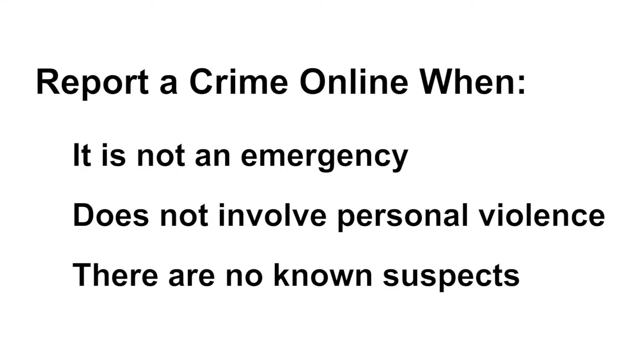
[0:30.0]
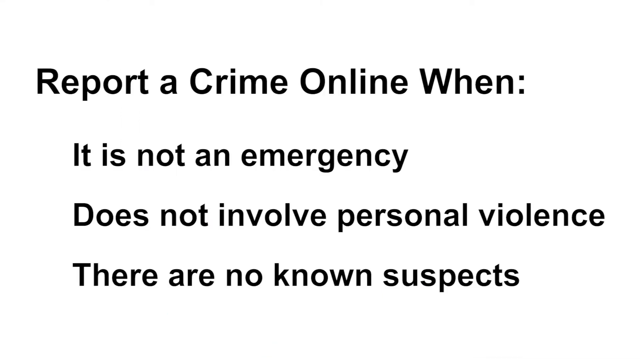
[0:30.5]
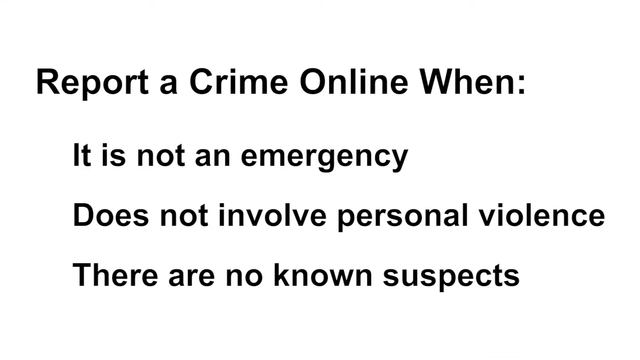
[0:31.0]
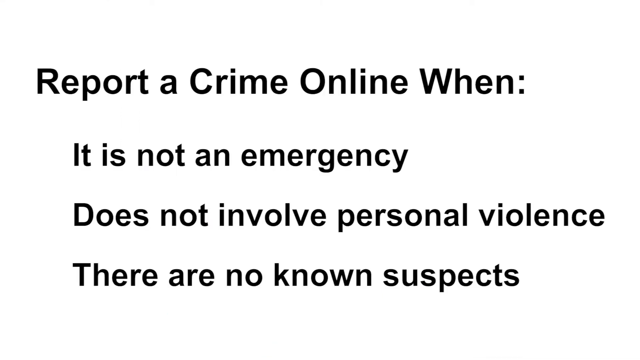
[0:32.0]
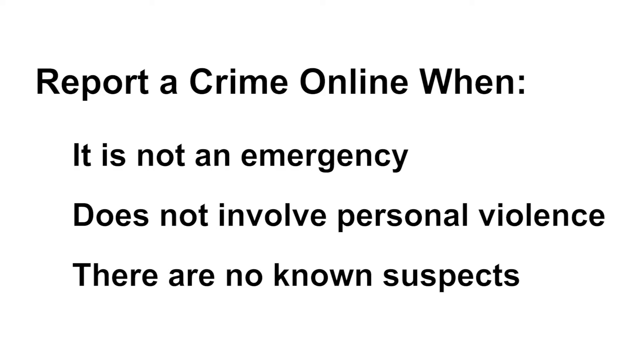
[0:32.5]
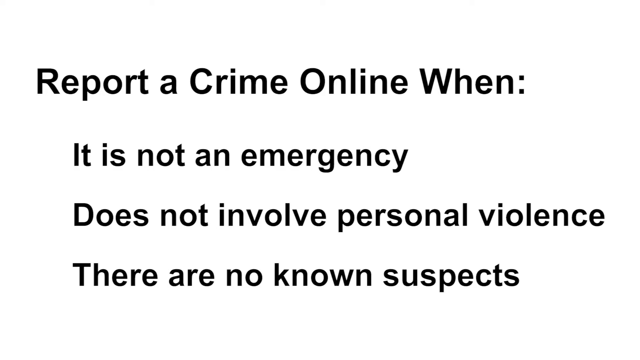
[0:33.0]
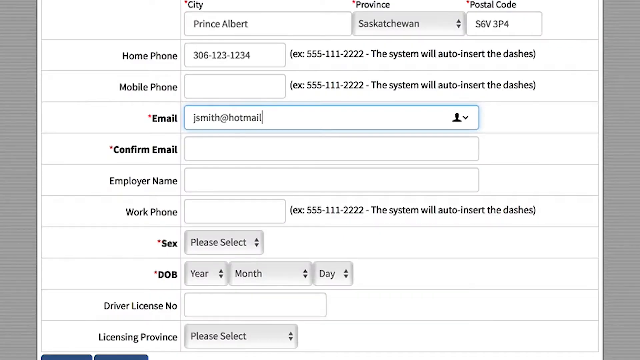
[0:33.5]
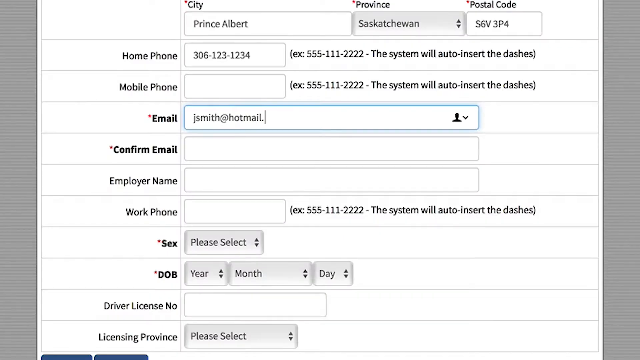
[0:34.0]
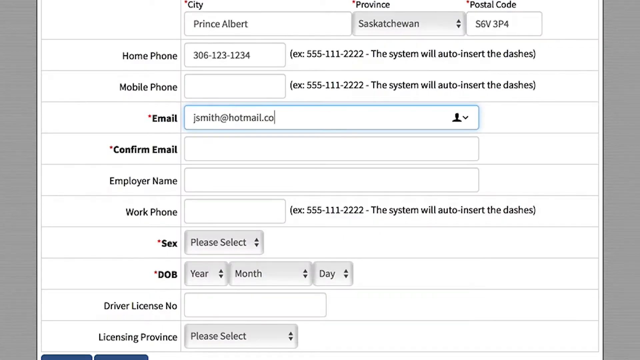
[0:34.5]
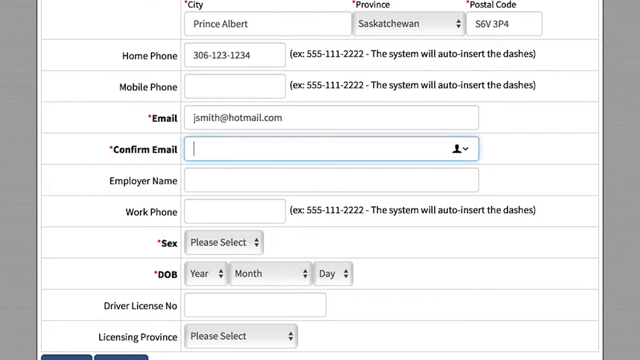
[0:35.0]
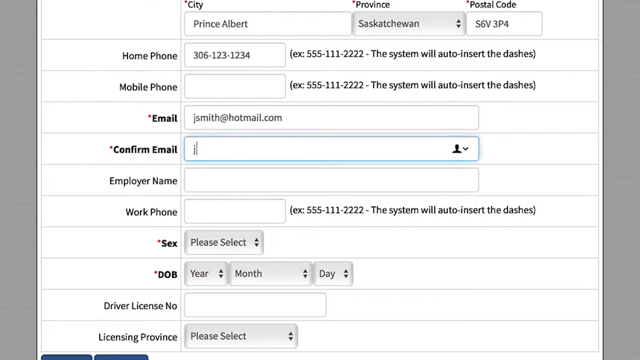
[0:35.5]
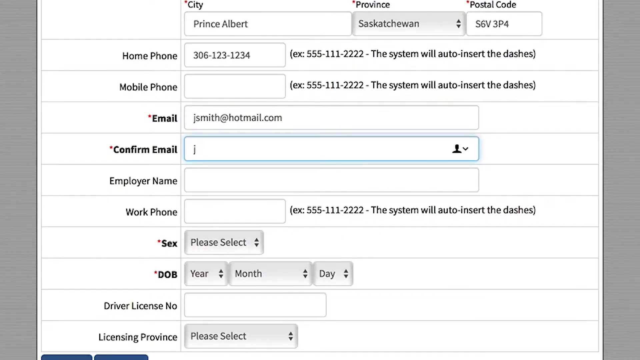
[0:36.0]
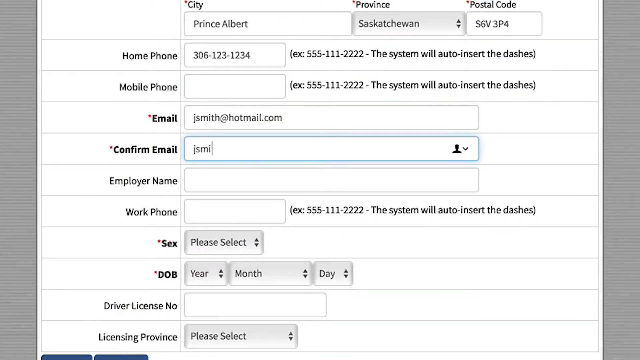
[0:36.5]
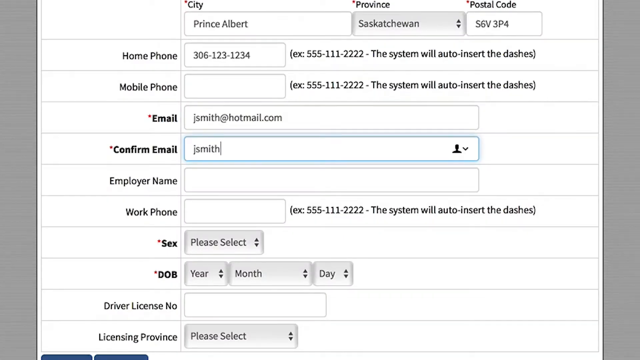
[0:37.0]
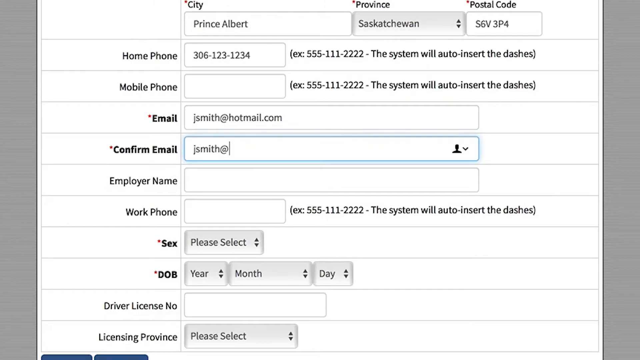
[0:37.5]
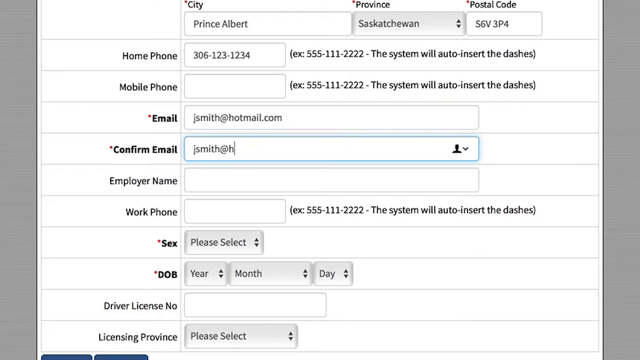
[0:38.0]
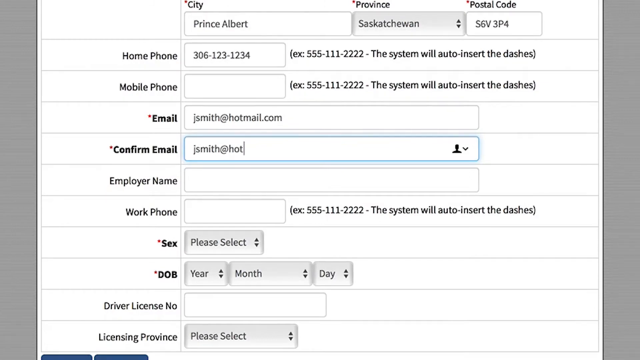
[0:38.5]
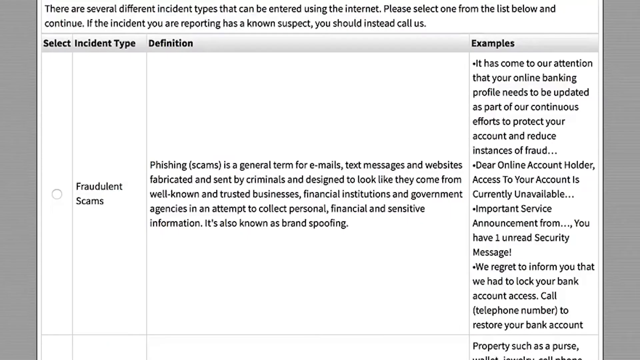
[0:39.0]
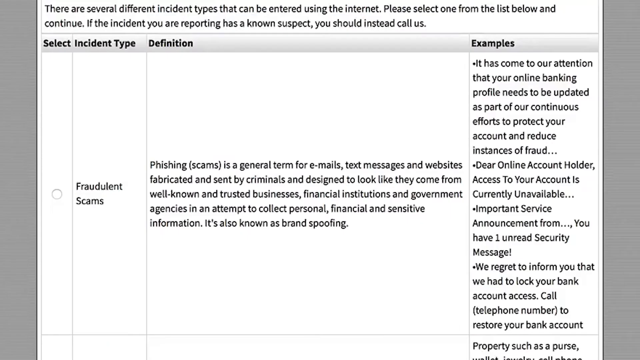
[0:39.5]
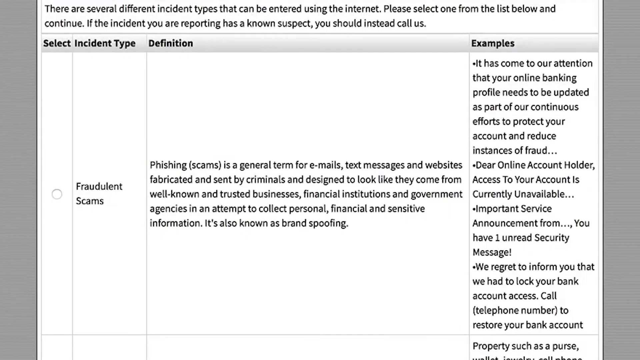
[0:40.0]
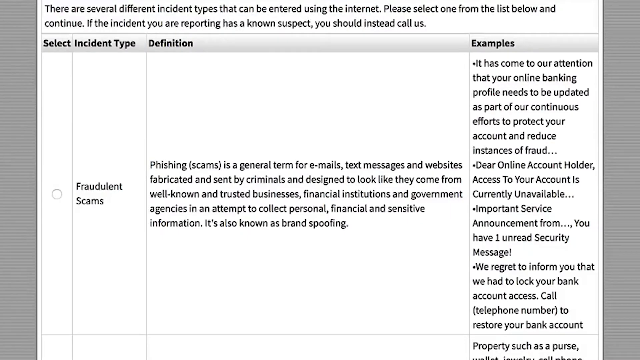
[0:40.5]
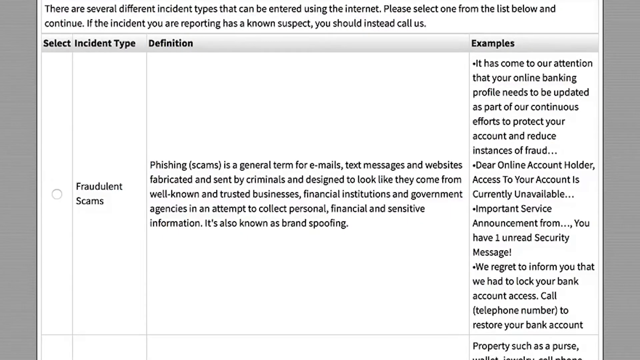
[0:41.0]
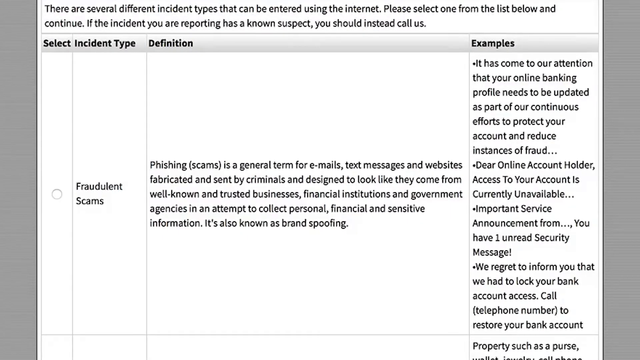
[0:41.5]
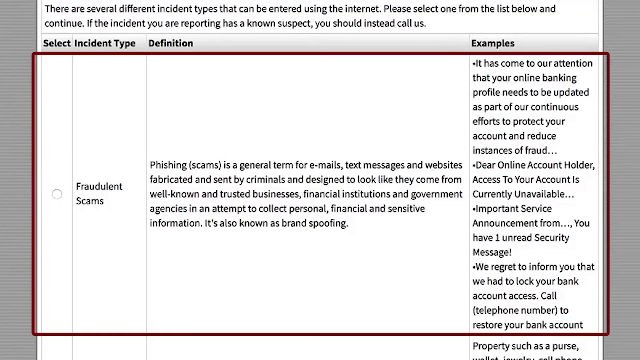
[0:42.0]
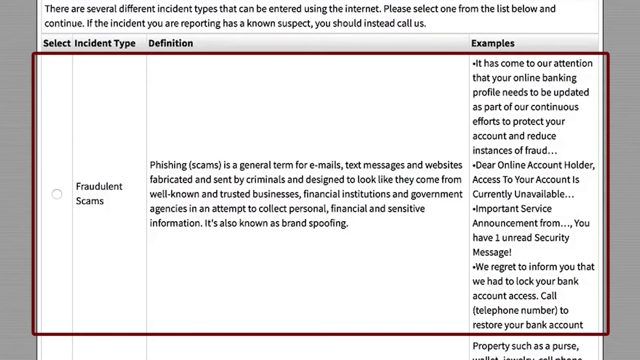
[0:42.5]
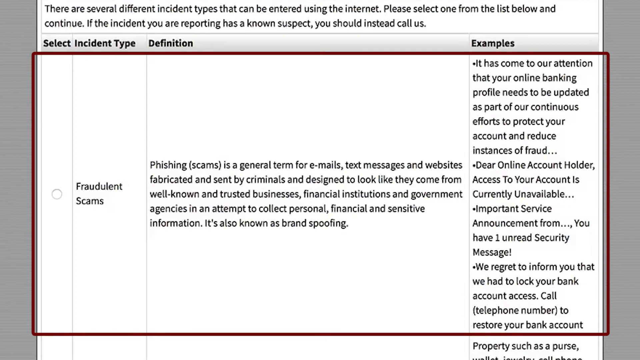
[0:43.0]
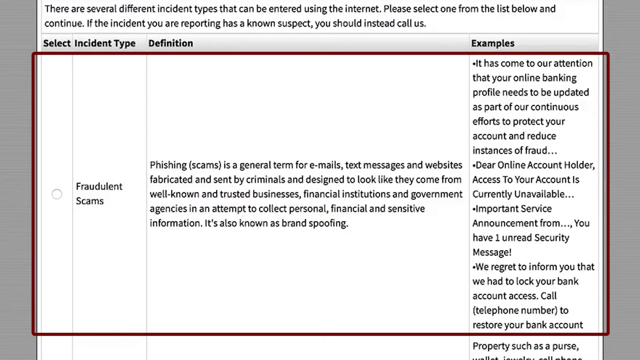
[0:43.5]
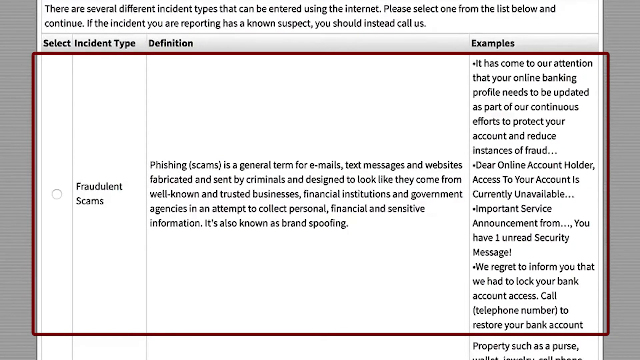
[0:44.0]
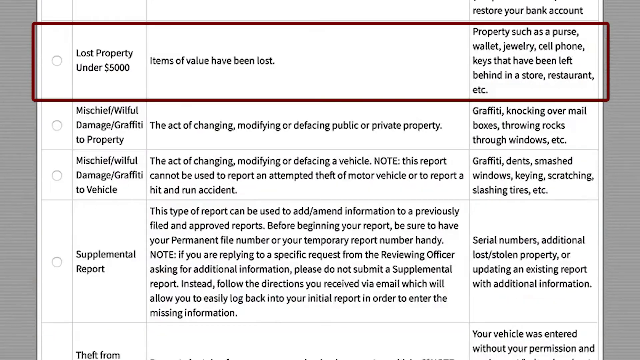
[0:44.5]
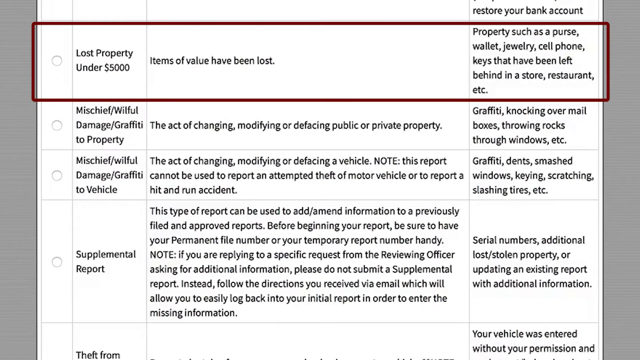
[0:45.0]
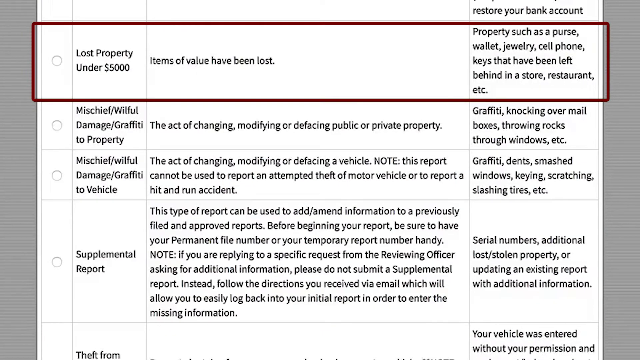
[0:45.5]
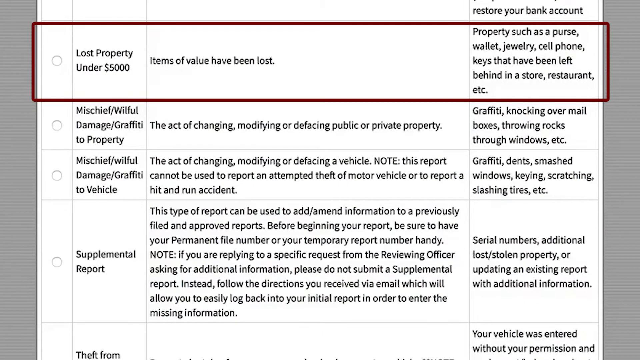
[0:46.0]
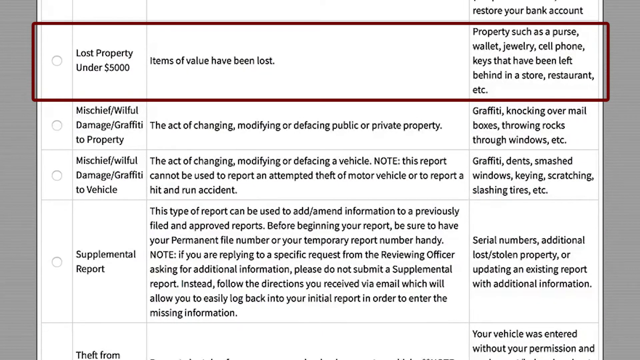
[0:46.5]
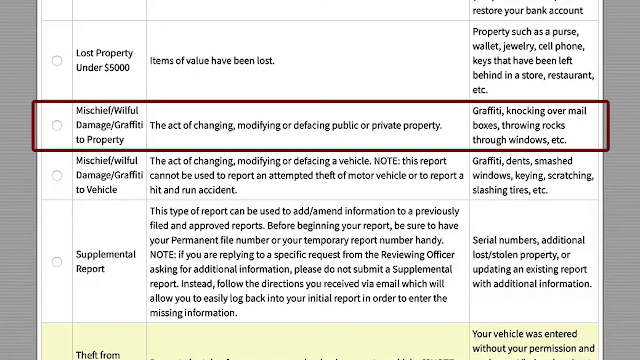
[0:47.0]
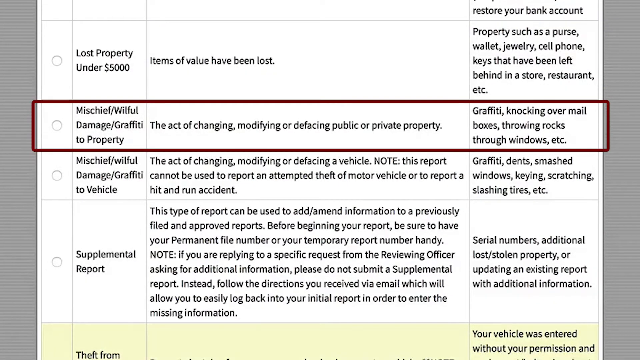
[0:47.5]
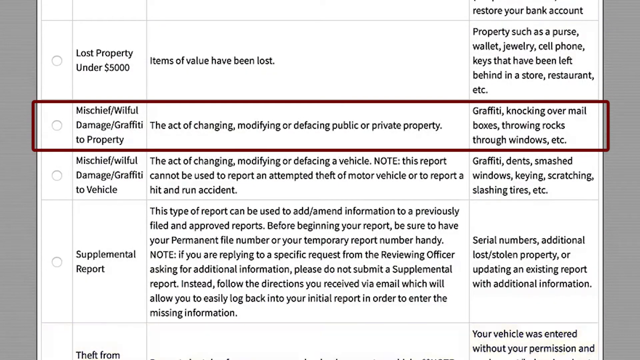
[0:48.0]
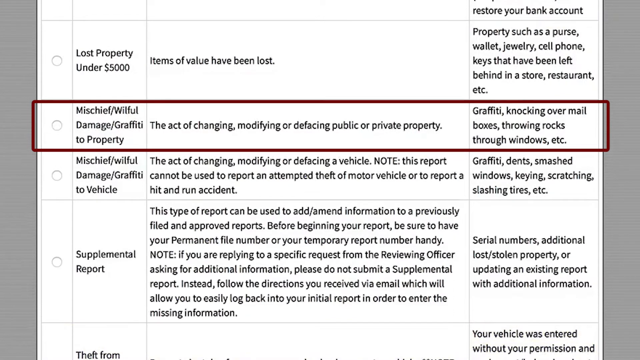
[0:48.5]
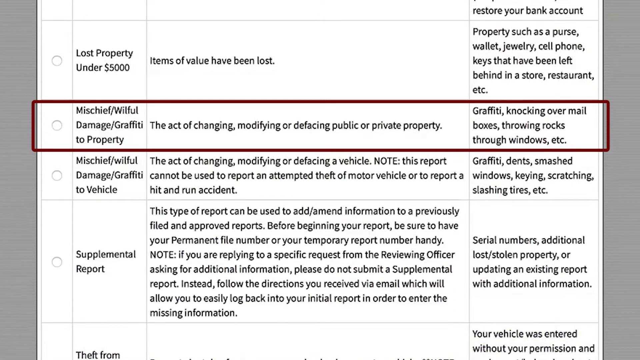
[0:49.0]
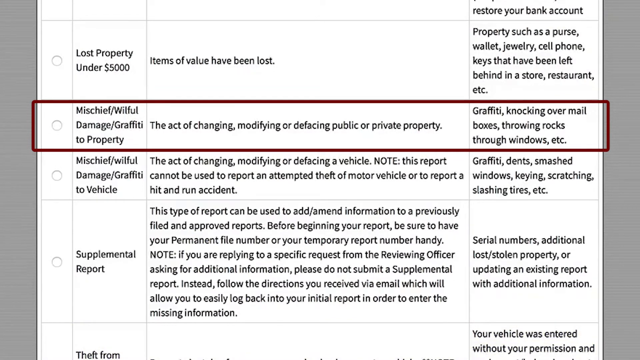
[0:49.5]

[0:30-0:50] The text about reporting a crime online when it is not an emergency, does not involve personal violence and there are no known suspects is on screen. An electronic form follows, with the city filled in as Prince Albert, the province as Saskatchewan, the postal code as "SSV3P4" and the home phone as "306-123-1234", with a note that the system will insert the dashes. Further fields are mobile phone, email ("jsmith.hotmail.com"), confirm email, employer name, work phone, sex (selecting man or woman), date of birth (selecting year, month and day), driver's license and license province. Text on screen reads "there are several different incident types that can be entered using the internet, please select one from the list below and continue, if the incident you are reporting has a known suspect, you should instead call us."